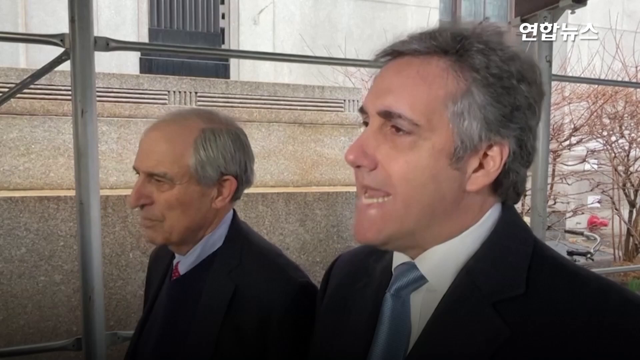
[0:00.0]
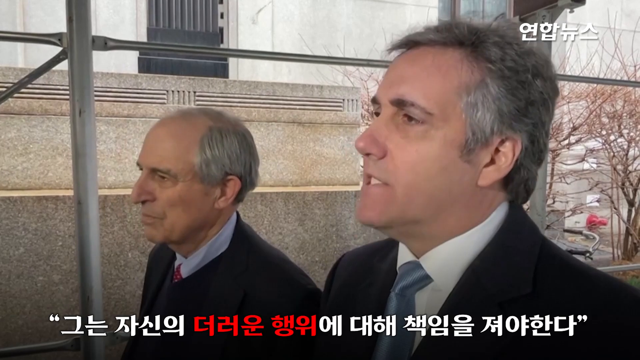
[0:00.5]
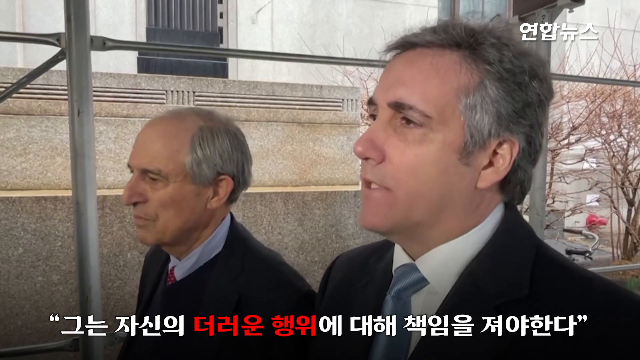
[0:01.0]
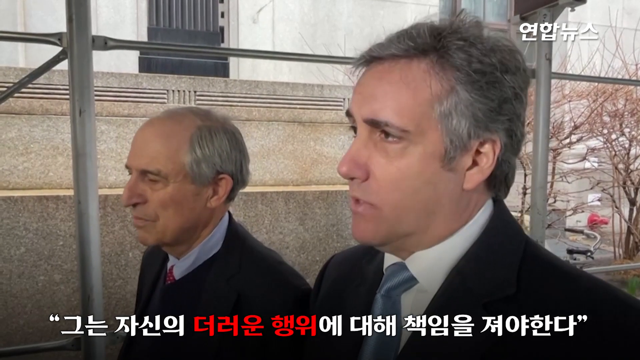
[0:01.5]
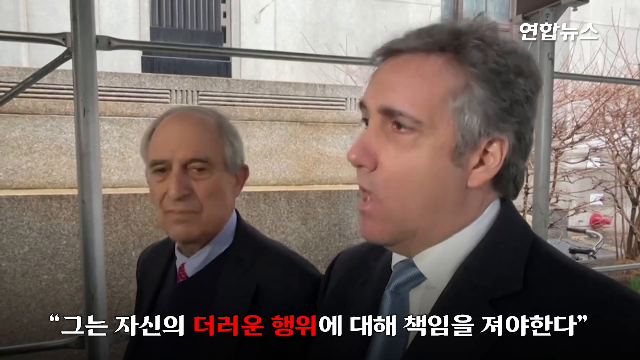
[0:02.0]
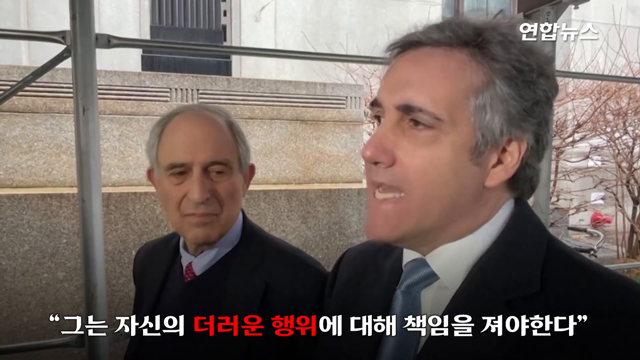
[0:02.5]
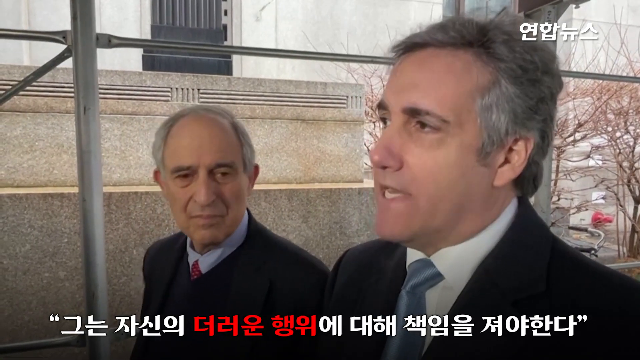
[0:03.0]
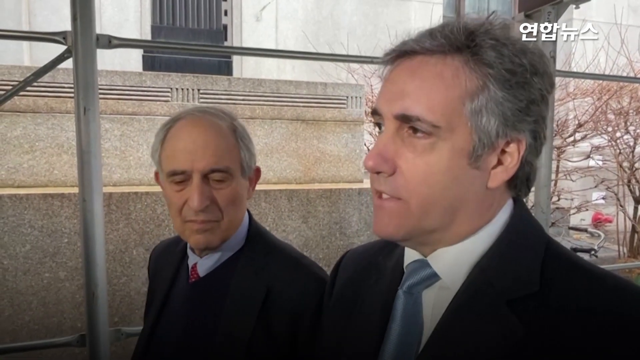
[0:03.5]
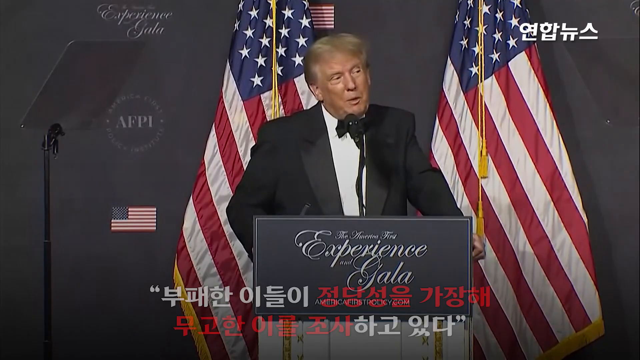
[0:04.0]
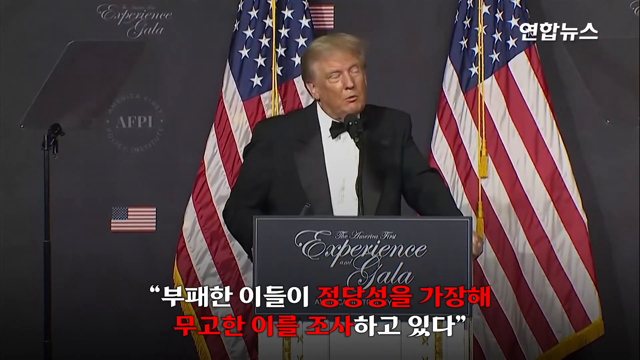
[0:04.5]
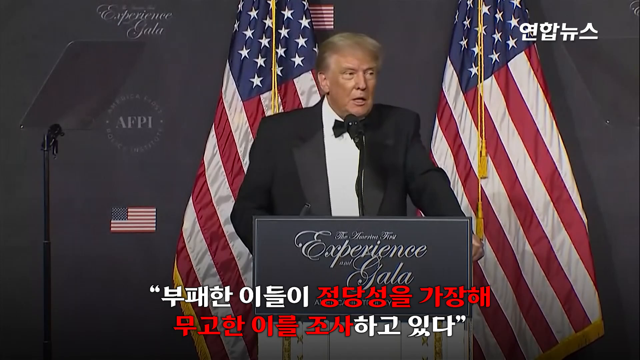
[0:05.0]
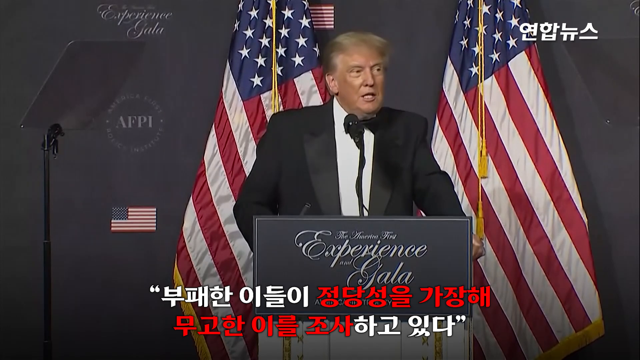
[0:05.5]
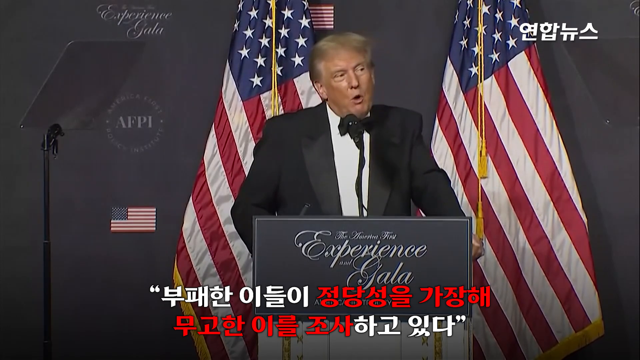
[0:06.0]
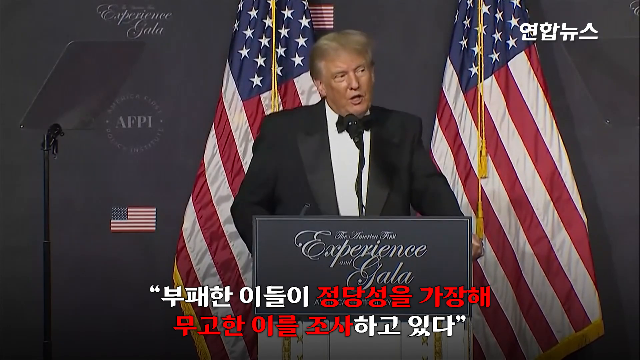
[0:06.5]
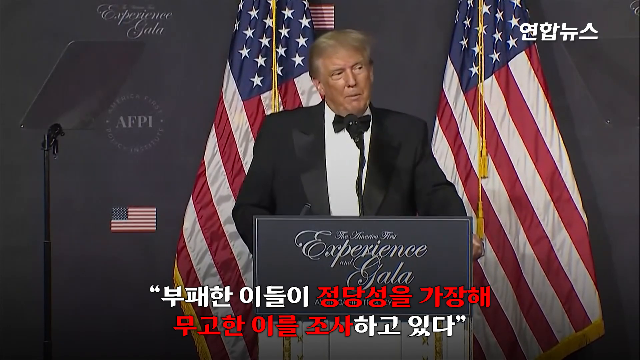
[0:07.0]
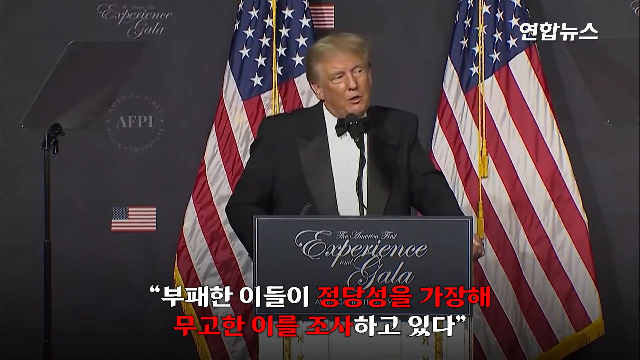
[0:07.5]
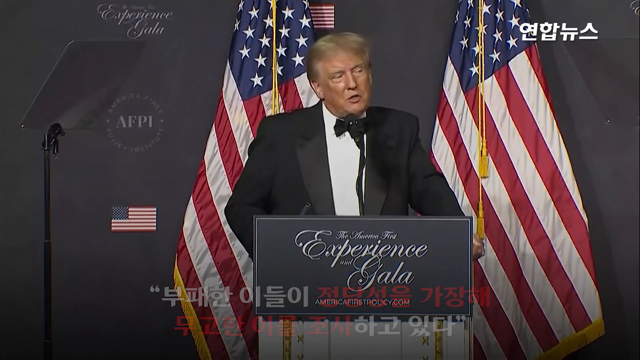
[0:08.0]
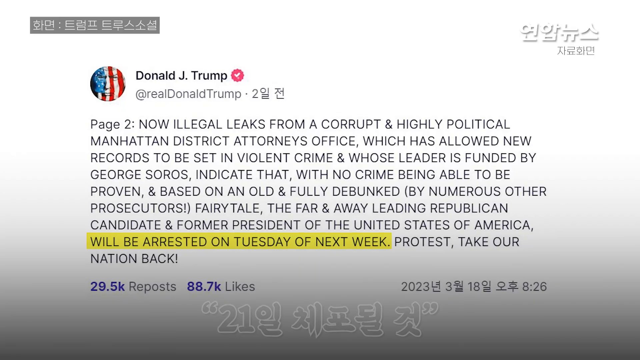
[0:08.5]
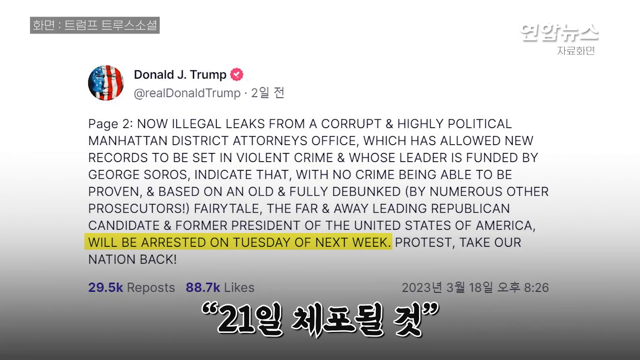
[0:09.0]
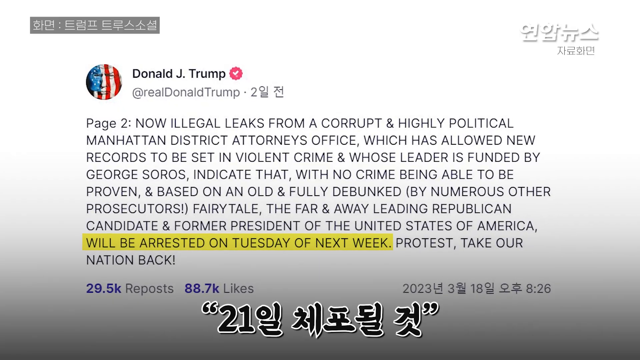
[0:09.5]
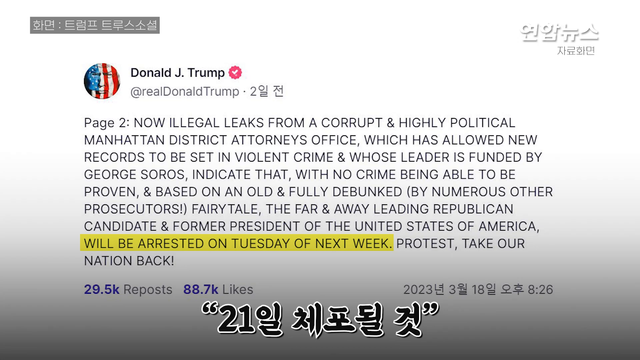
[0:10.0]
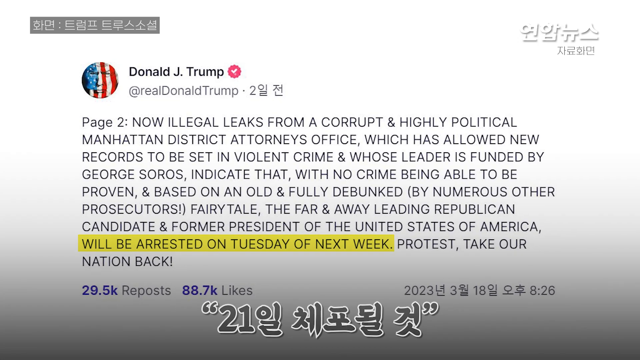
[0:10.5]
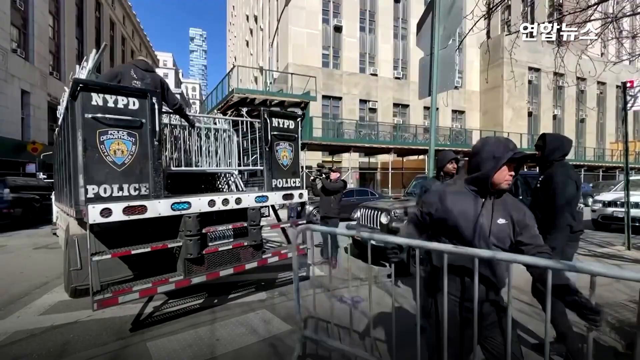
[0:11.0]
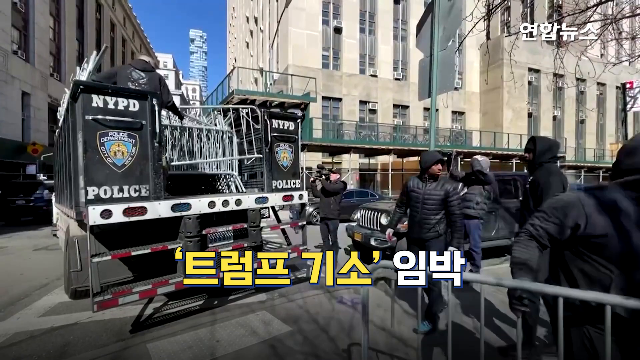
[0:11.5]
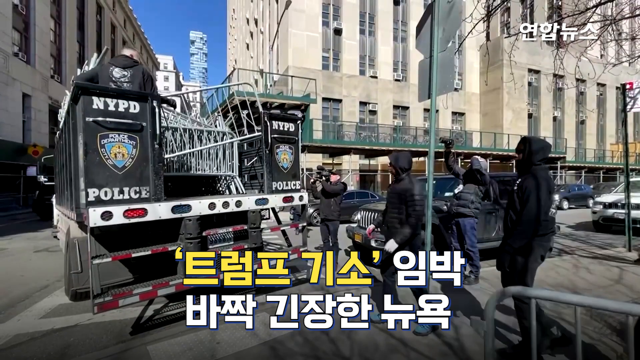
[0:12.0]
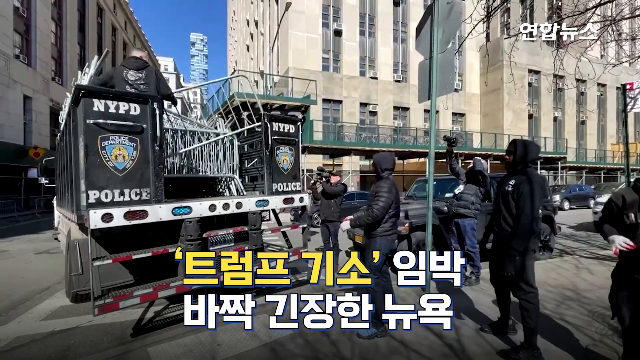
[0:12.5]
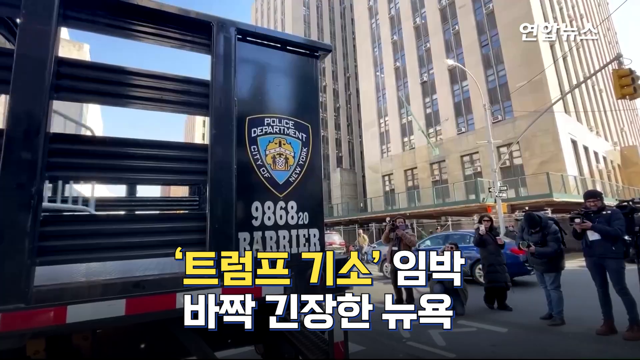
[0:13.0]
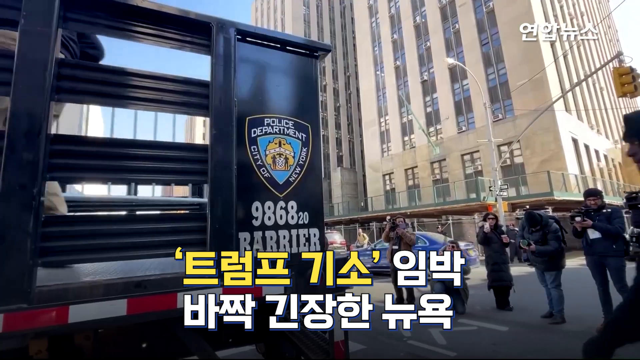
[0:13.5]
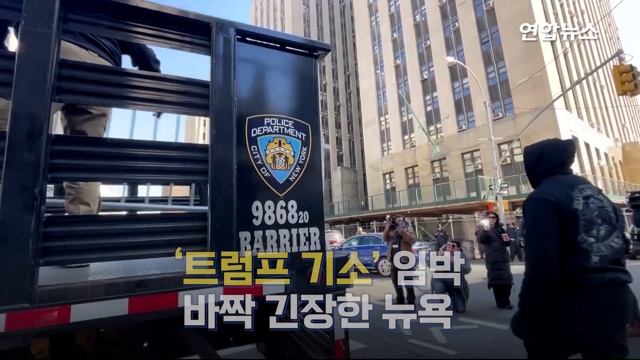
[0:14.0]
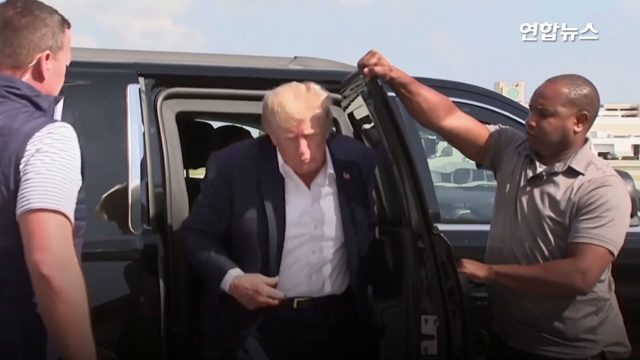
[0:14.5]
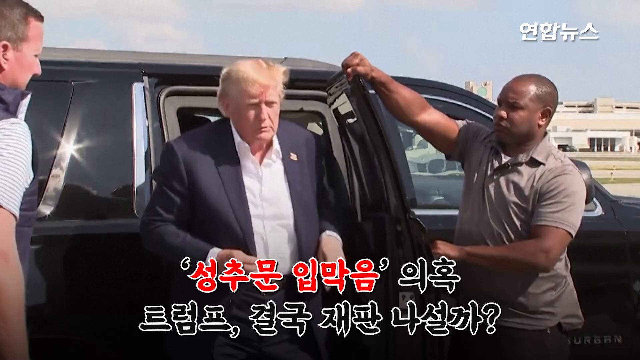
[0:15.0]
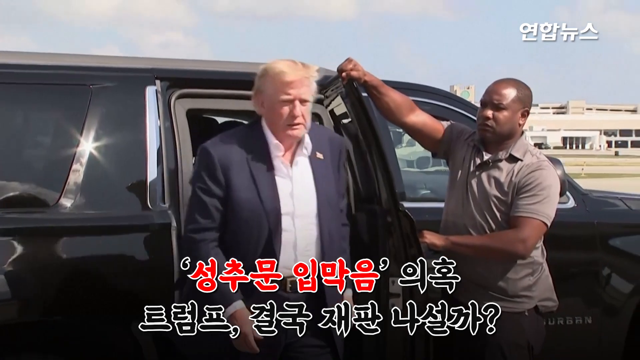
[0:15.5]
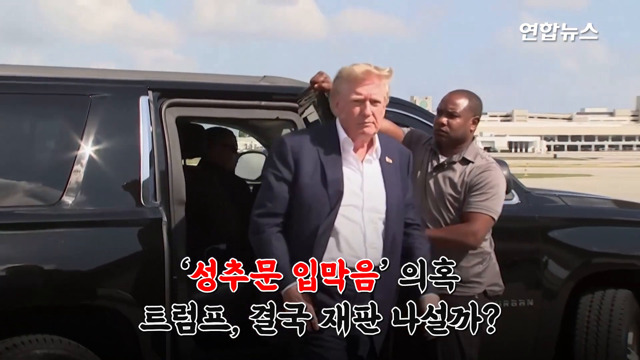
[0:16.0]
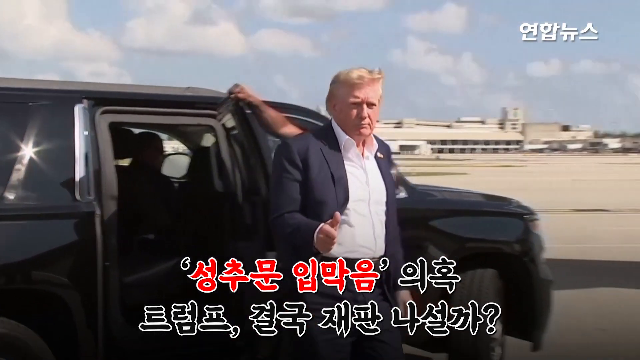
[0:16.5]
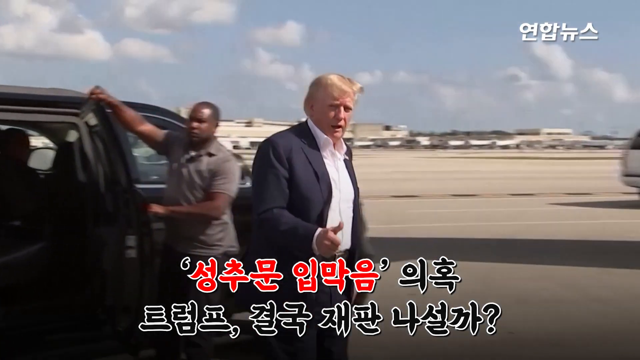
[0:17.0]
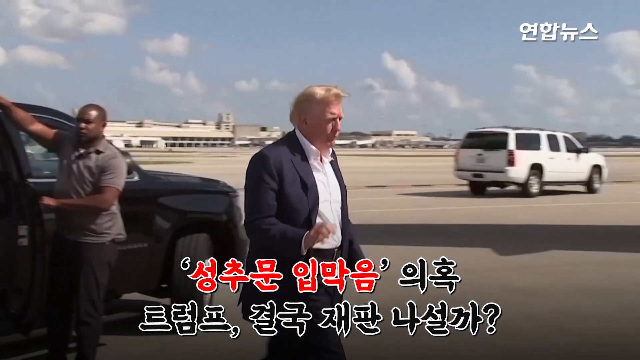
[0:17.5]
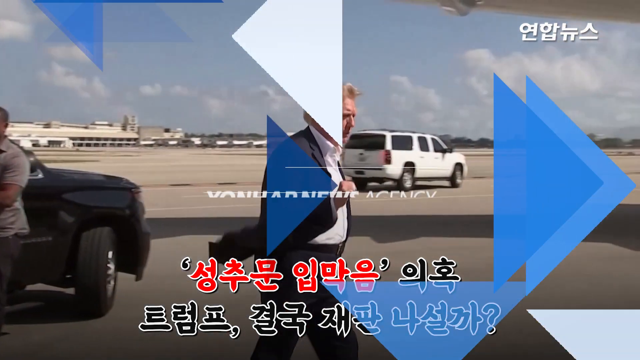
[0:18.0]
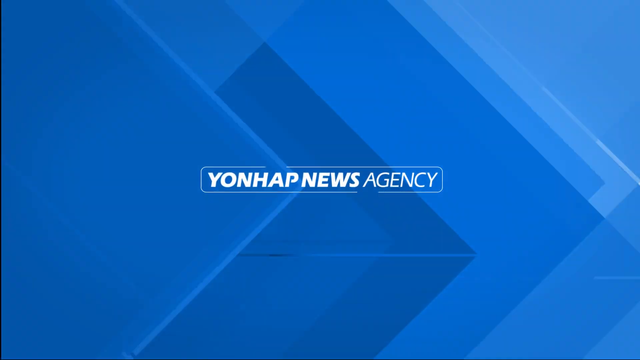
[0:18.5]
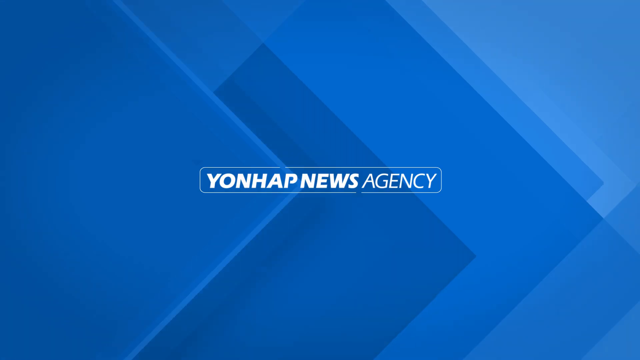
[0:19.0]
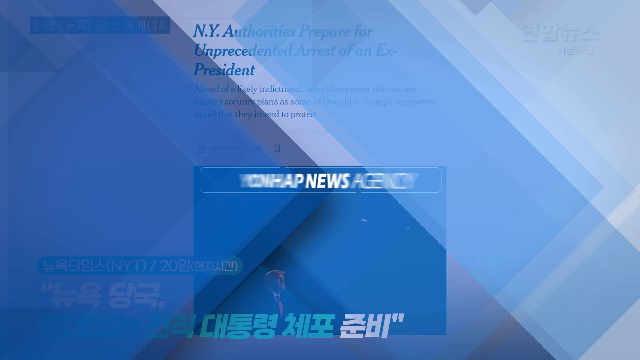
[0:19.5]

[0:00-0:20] A newscast carries what appears to be Chinese, Japanese, Korean or Vietnamese text, but the people shown are American. Michael Cohen appears with his attorney next to him, and then President Trump is seen for a split second at an event. The video is from Yonhap News Agency. A quick shot shows Donald Trump at "The America First Experience and Gala," with two American flags behind him. Next comes text that is apparently a tweet from Donald J. Trump's "real Donald Trump" page: "illegal leaks from a corrupt and highly political Manhattan district attorney's office which has allowed new records to be set in violent crime and whose leader is funded by George Soros indicate that with no crime being able to prove it and based on an old and fully debunked by numerous other prosecutors fairy tale the far and away leading Republican candidate and former president of the United States of America will be arrested on Tuesday of next week protest take our nation back." A scene of NYPD officials in New York City follows.